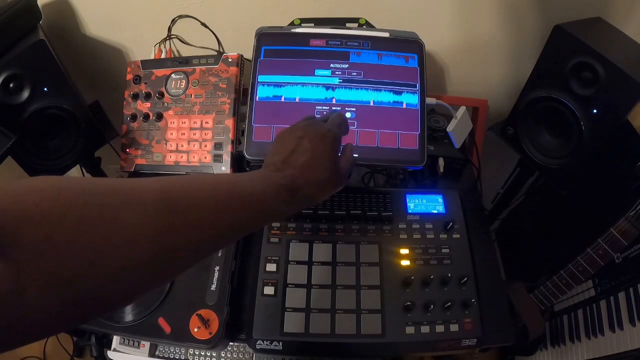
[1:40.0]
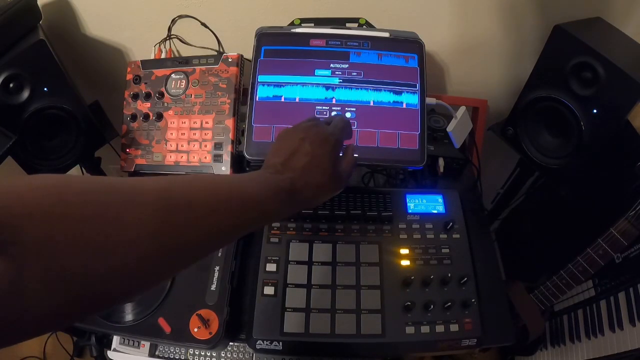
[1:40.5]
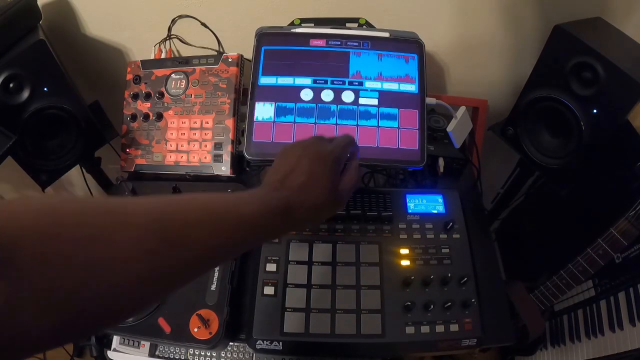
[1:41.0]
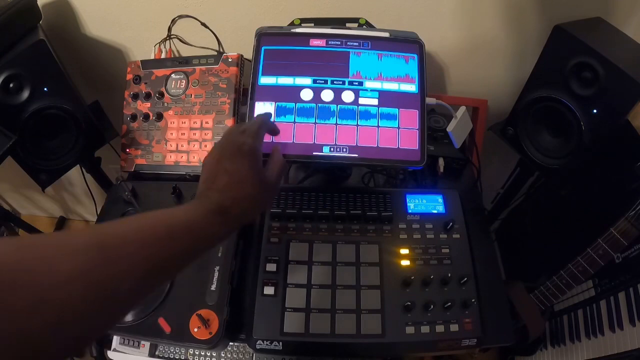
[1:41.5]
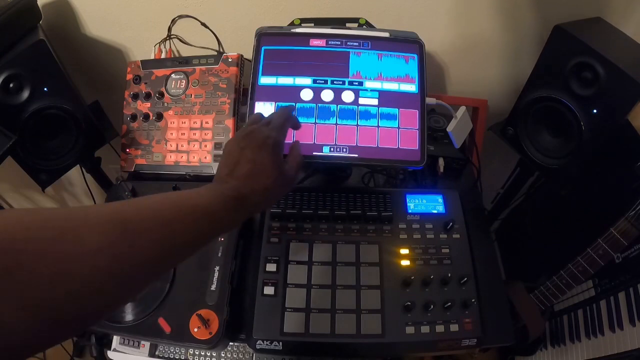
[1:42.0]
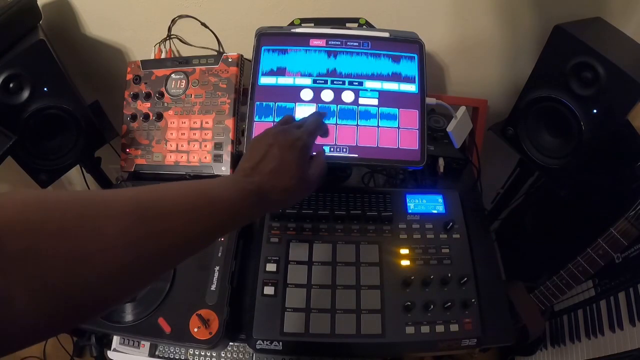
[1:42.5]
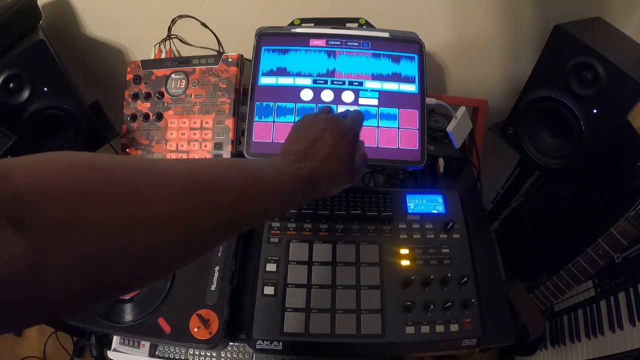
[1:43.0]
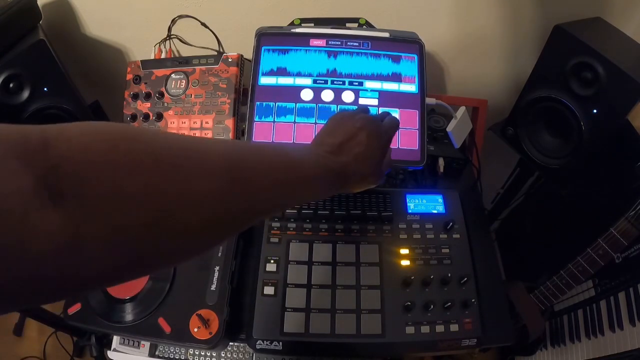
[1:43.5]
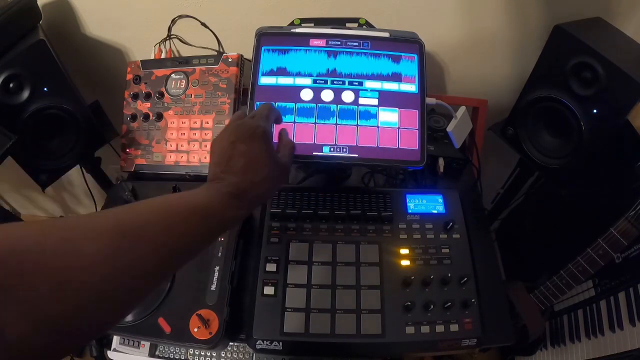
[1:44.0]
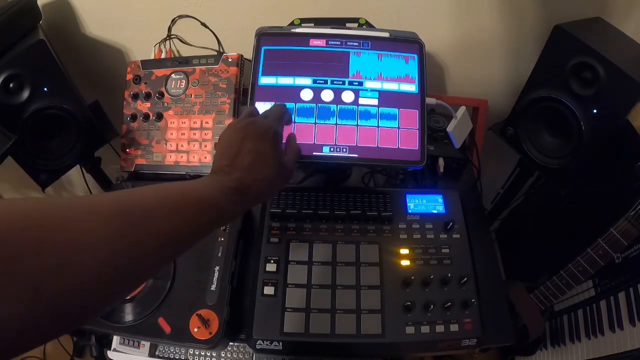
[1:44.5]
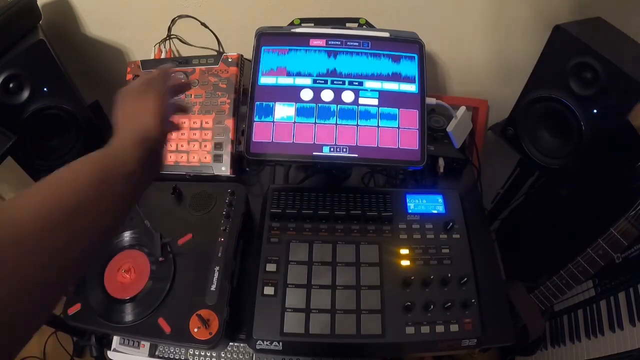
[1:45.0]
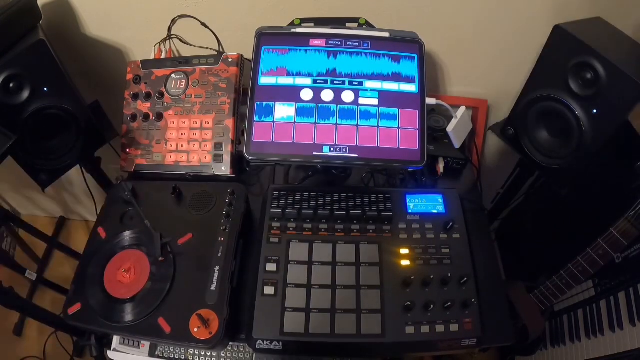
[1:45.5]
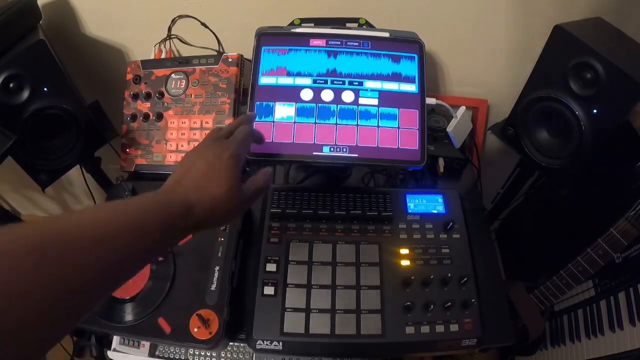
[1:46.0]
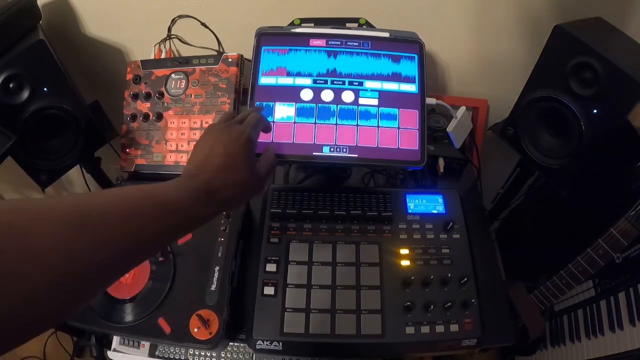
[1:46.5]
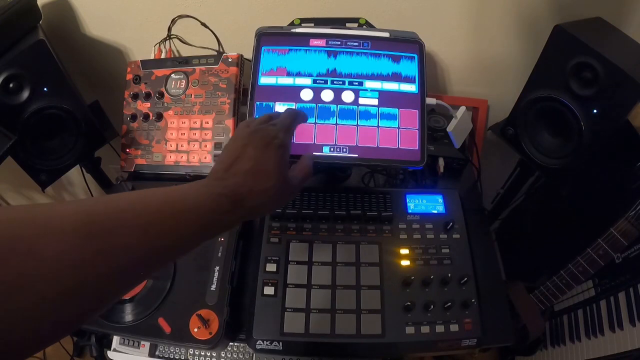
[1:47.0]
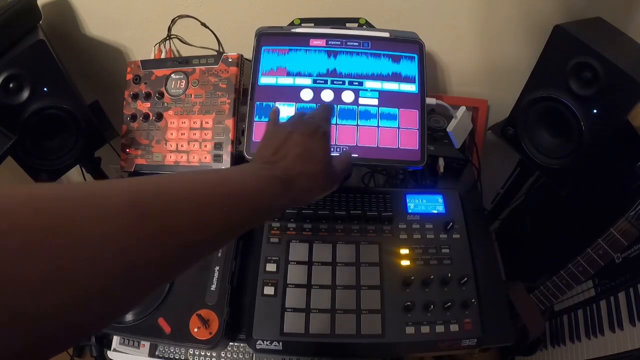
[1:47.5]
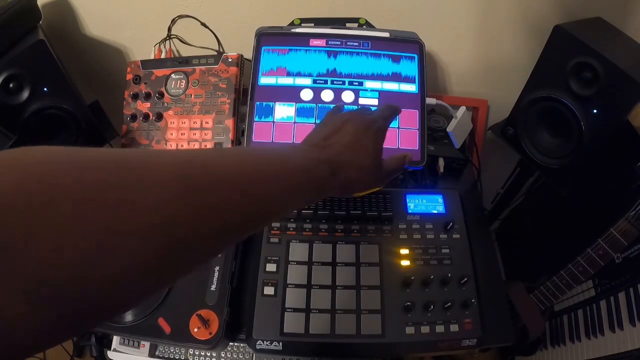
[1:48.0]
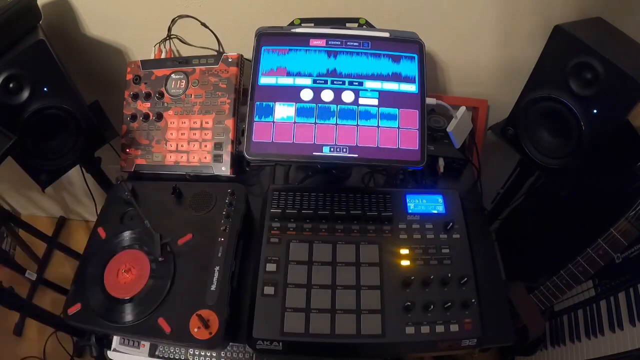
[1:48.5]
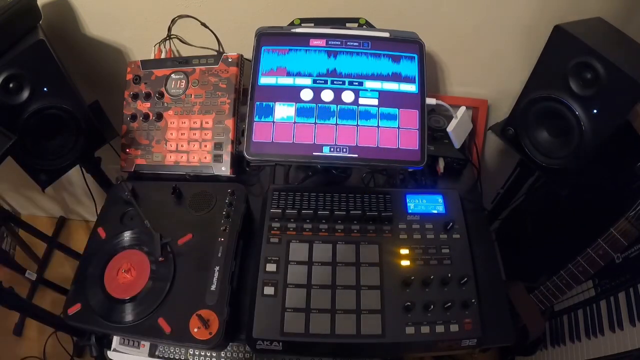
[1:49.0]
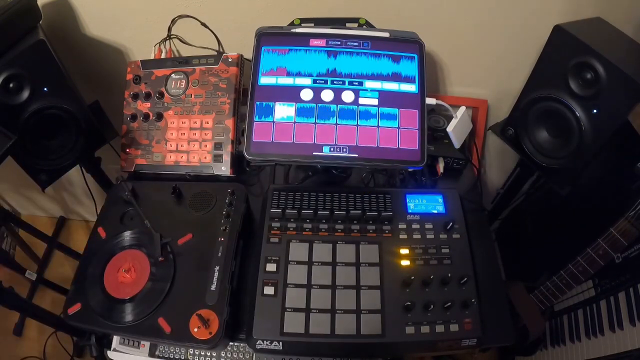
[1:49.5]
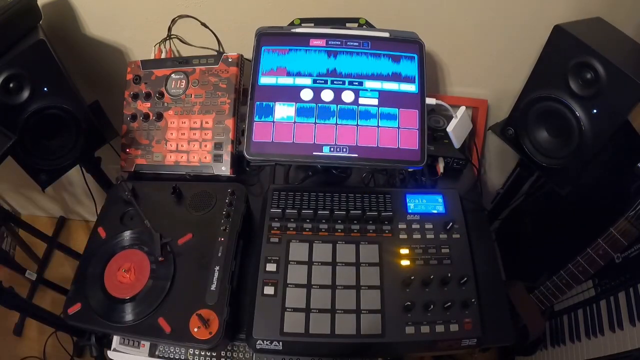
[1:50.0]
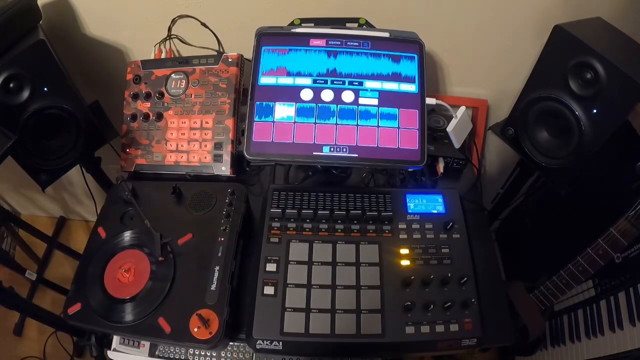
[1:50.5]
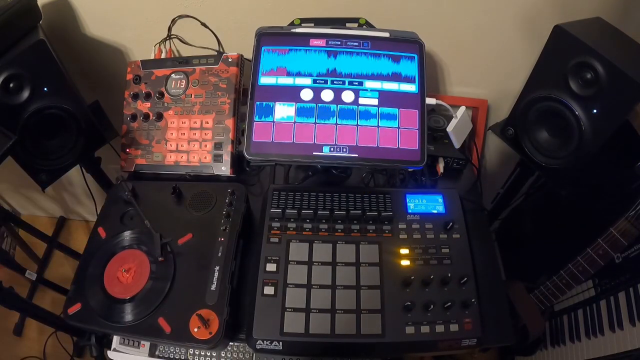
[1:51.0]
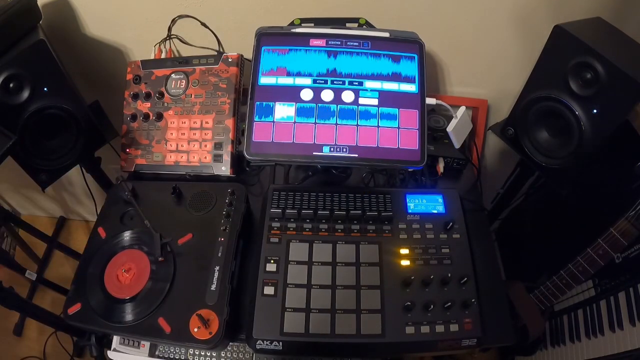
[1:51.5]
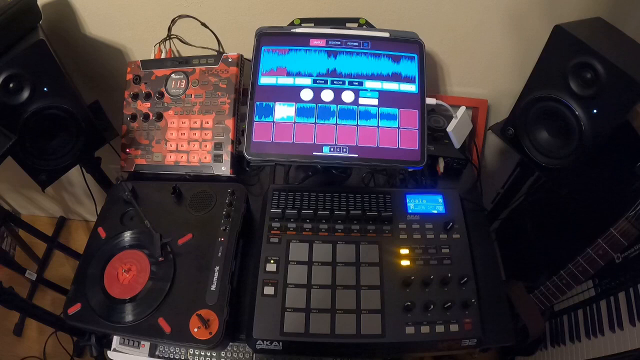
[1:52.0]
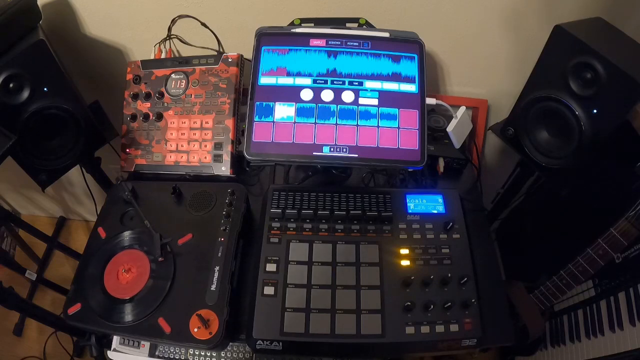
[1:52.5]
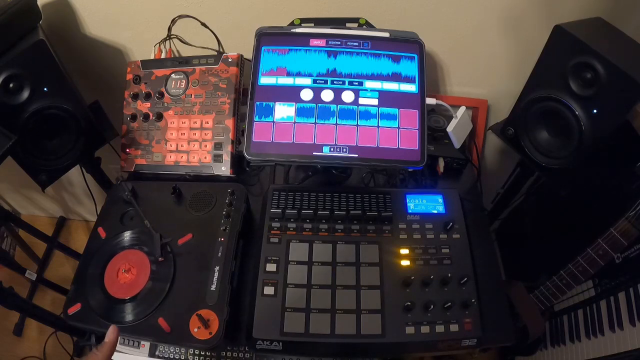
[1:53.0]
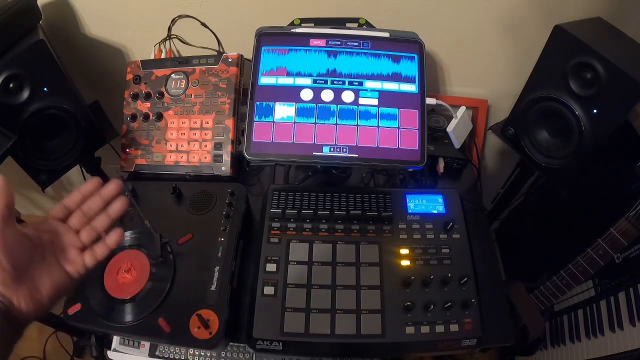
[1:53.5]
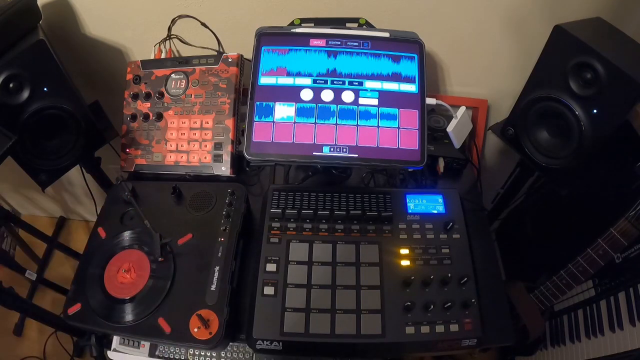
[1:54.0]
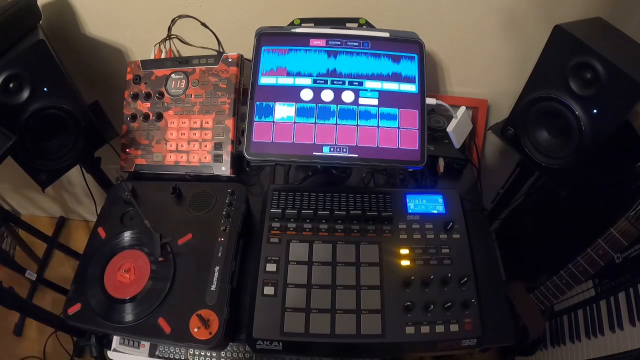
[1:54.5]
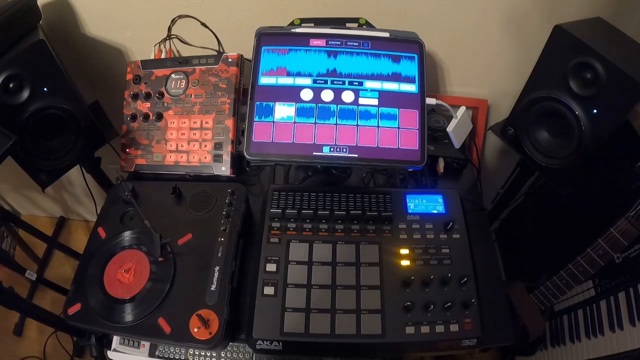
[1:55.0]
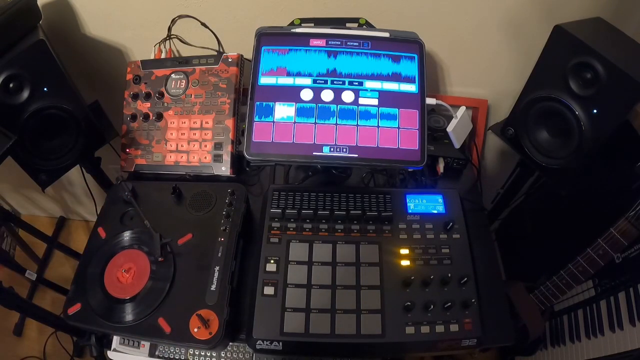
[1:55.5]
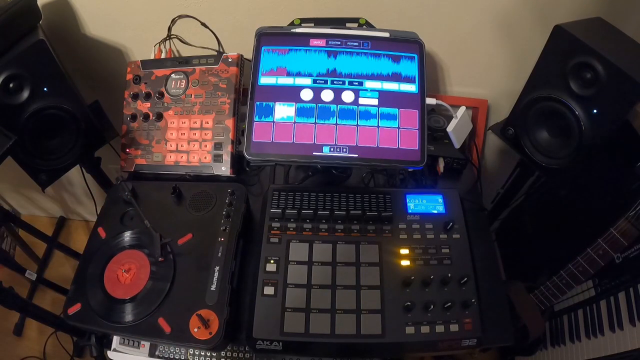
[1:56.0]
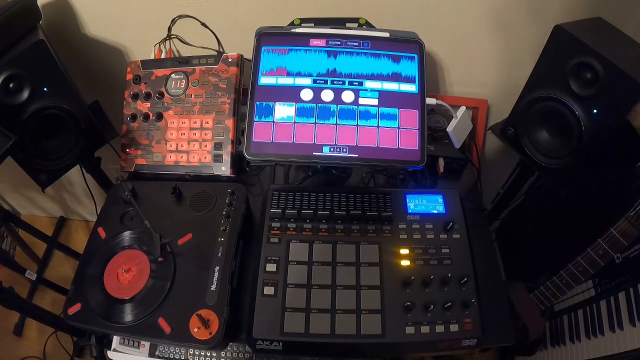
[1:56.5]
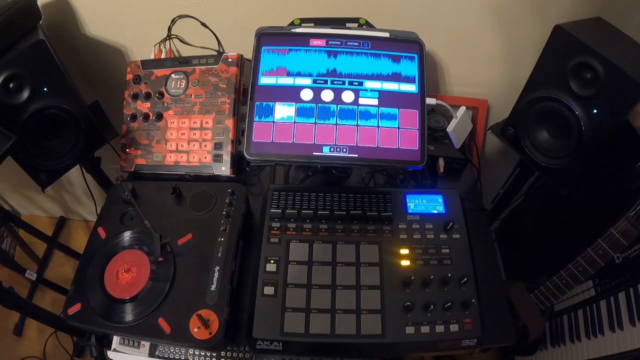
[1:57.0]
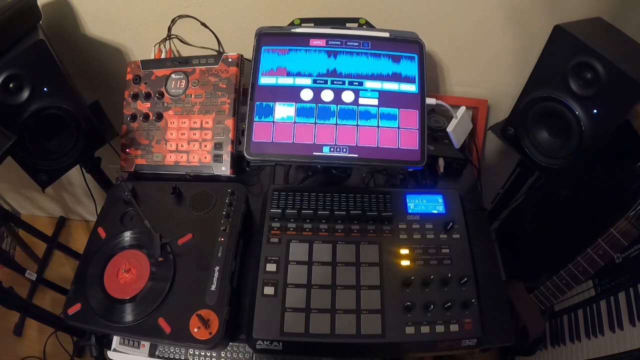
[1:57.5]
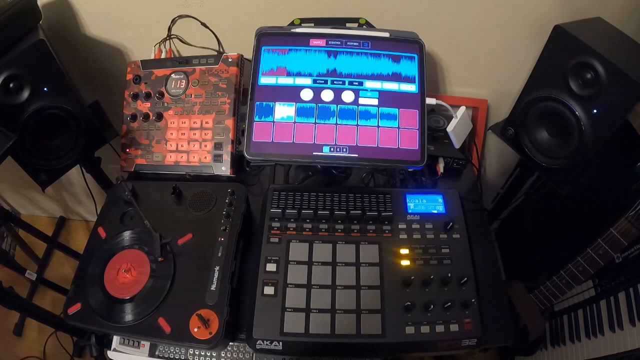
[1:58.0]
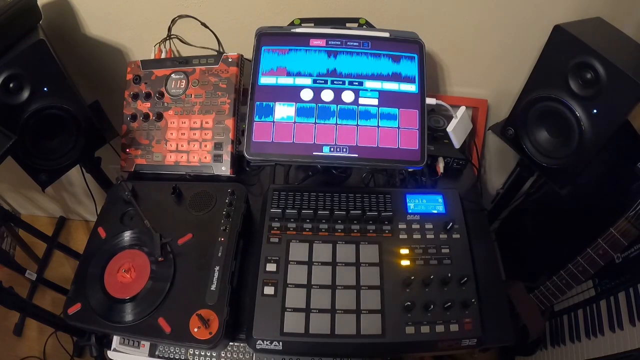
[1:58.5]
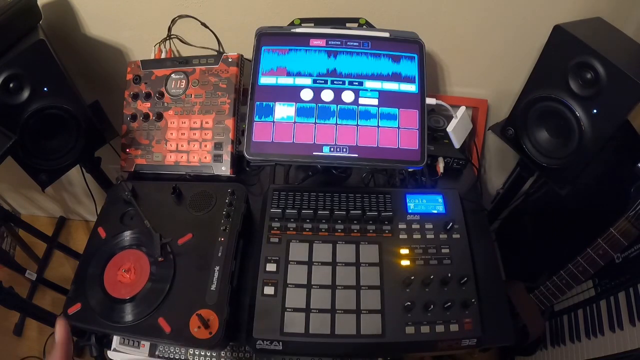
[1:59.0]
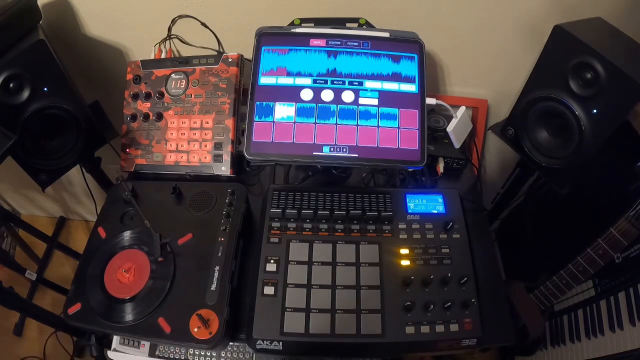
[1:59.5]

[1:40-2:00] The person presses different buttons on the touchscreen monitor in front of them, and each touch brings up different options on the screen. In the lower left of the screen, a vinyl record player is playing a record; the record spins slowly in a clockwise direction with the arm of the record player on top of it. The user keeps using his fingers to open menus and select options on the touchscreen equipment.